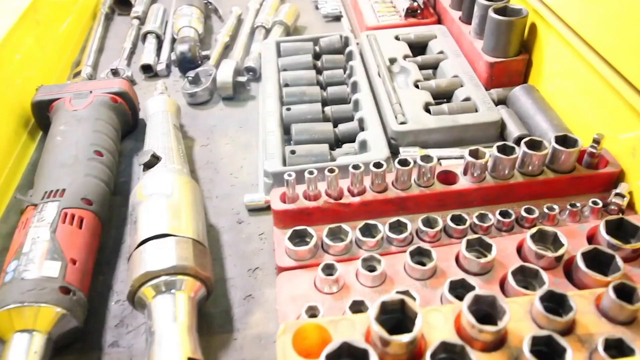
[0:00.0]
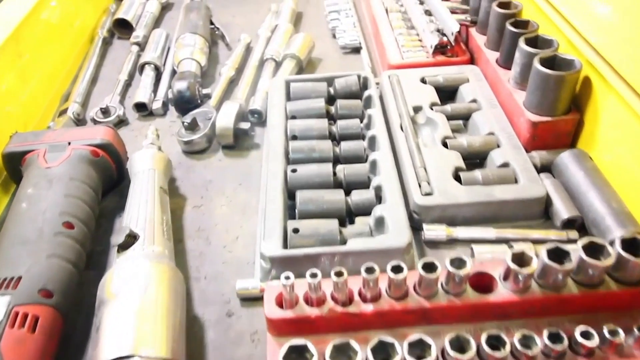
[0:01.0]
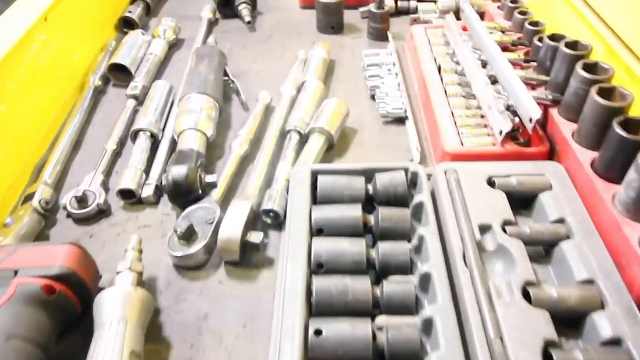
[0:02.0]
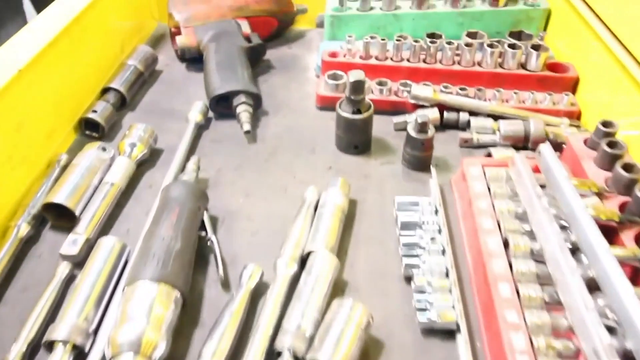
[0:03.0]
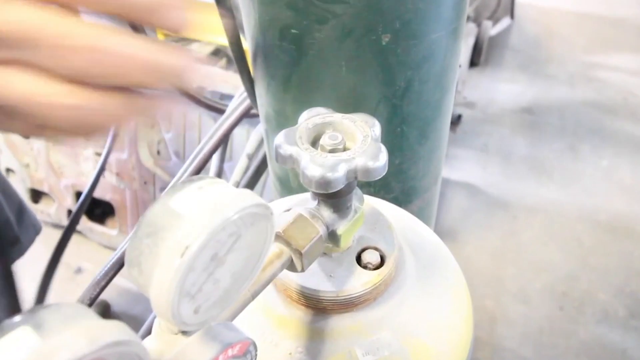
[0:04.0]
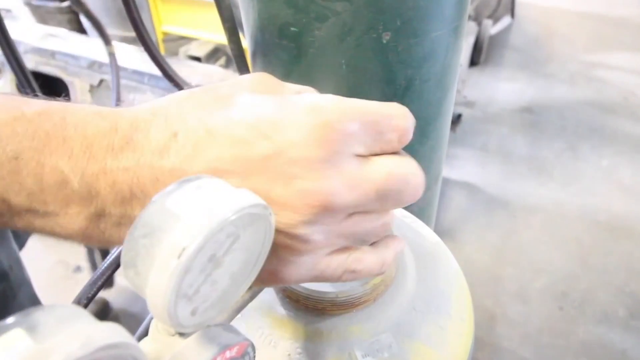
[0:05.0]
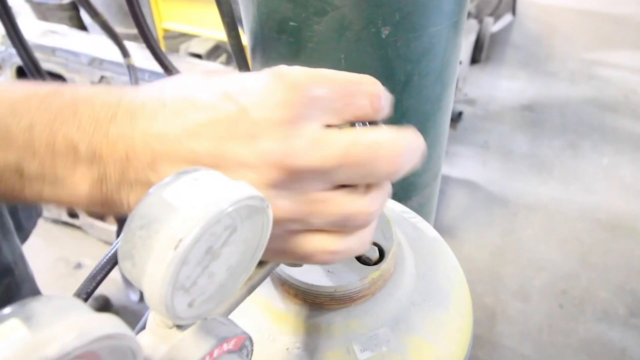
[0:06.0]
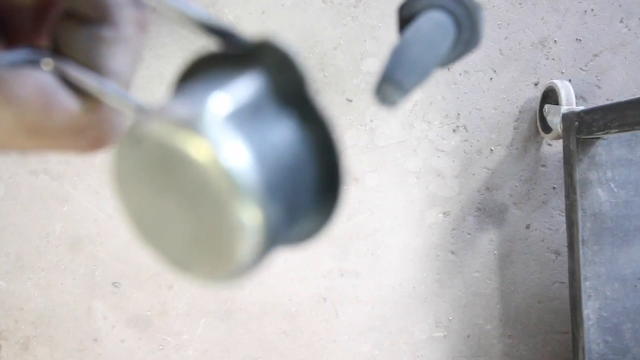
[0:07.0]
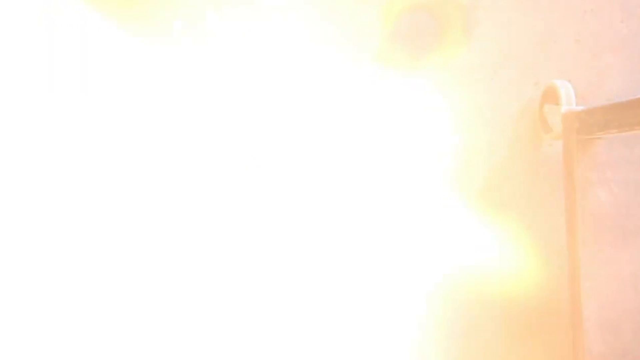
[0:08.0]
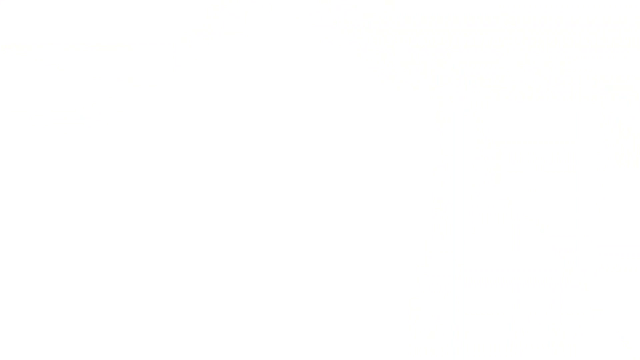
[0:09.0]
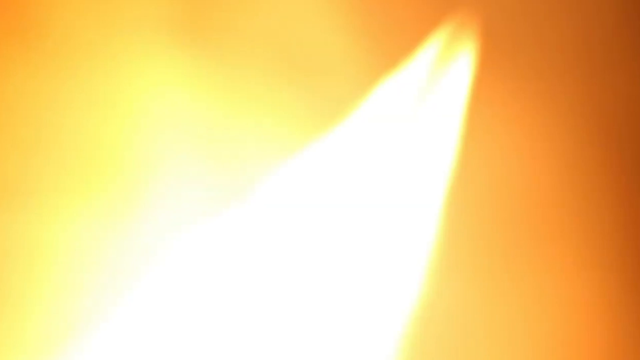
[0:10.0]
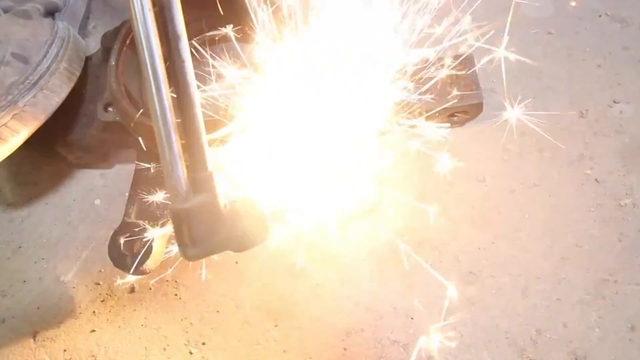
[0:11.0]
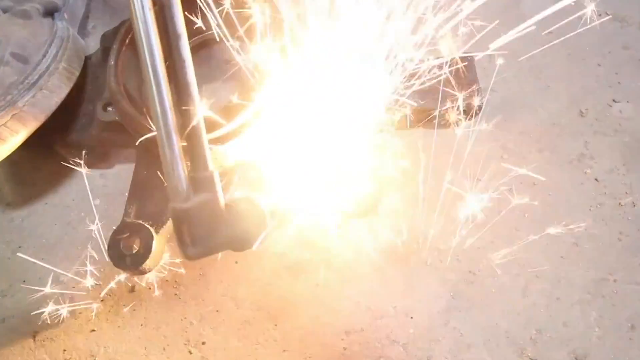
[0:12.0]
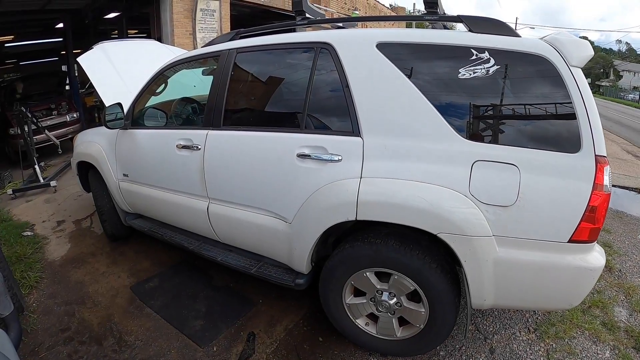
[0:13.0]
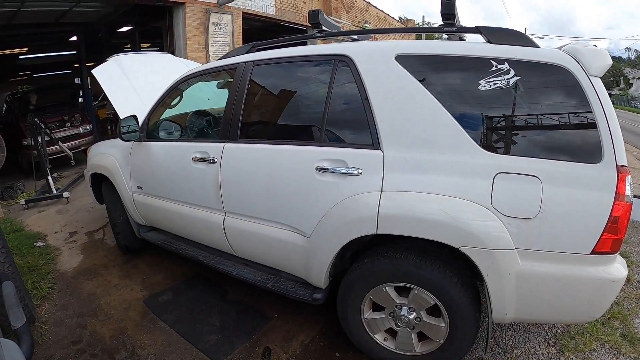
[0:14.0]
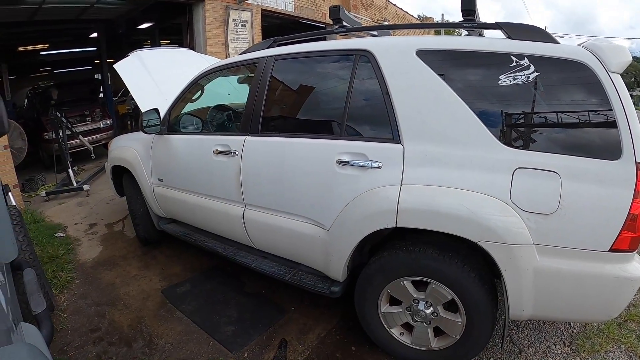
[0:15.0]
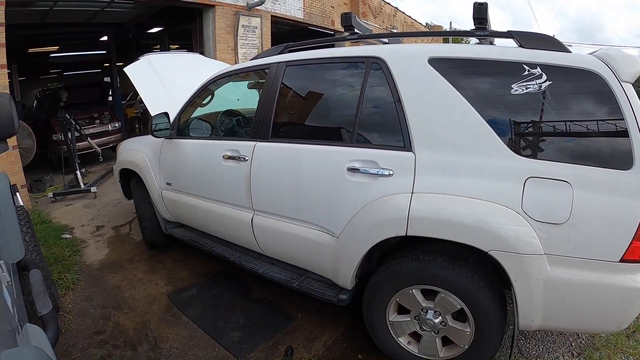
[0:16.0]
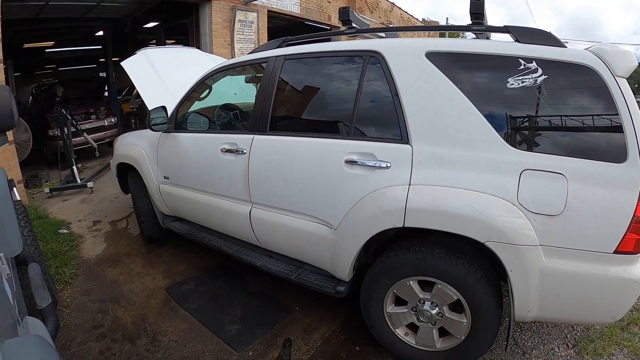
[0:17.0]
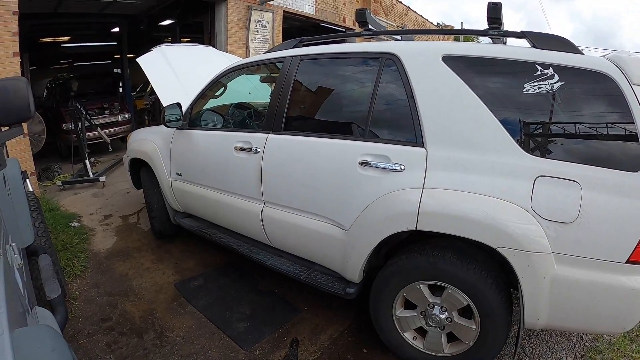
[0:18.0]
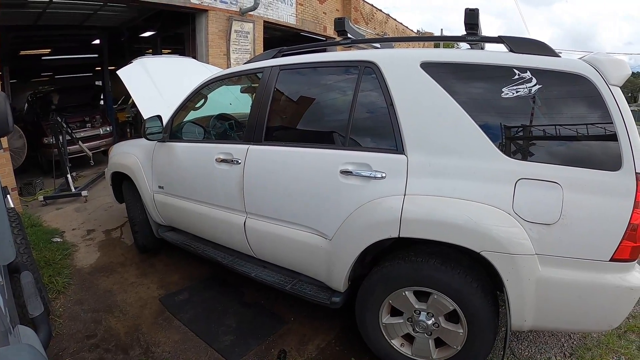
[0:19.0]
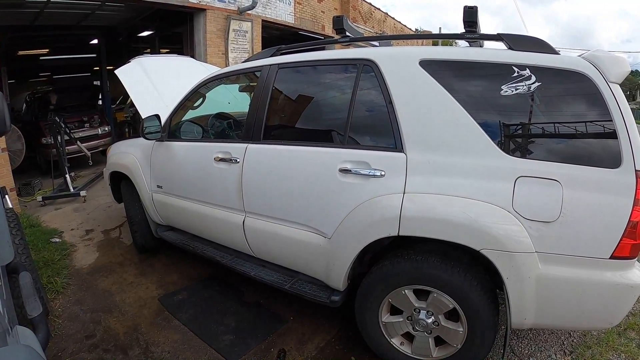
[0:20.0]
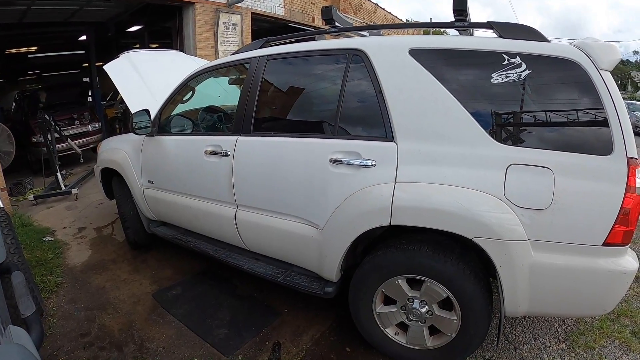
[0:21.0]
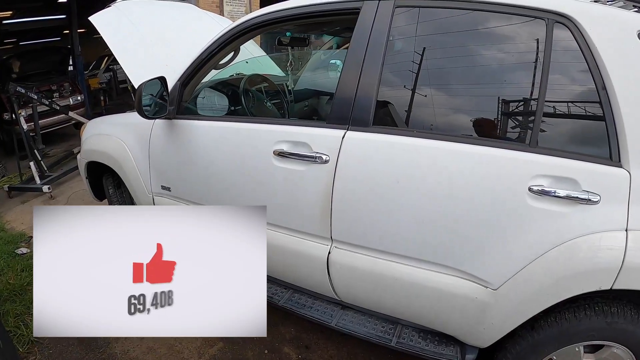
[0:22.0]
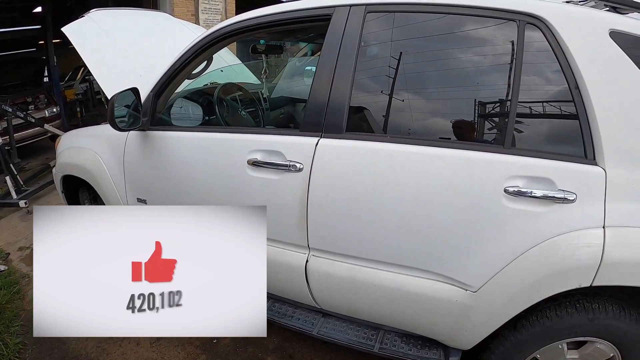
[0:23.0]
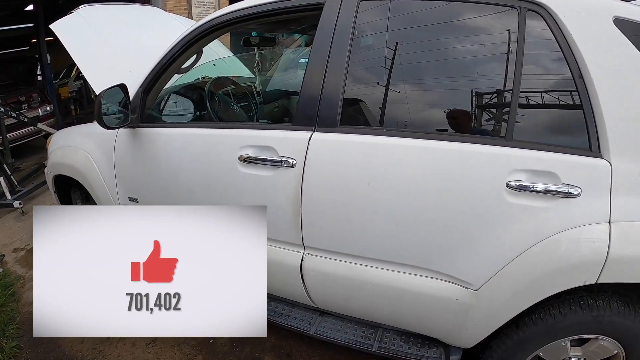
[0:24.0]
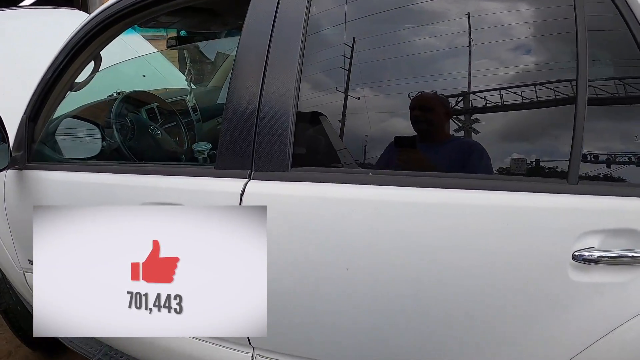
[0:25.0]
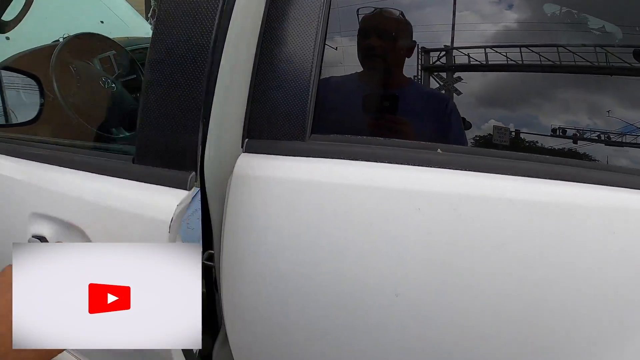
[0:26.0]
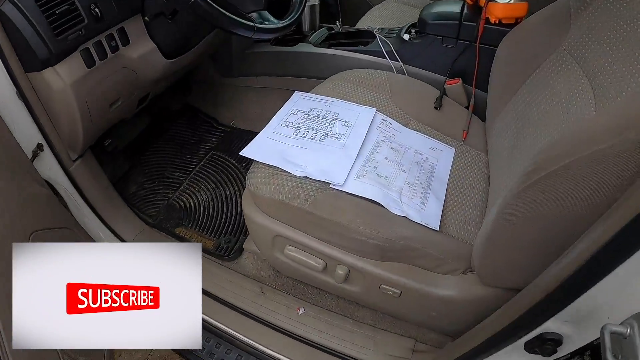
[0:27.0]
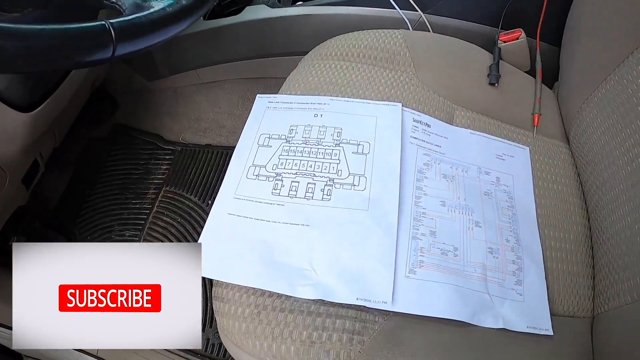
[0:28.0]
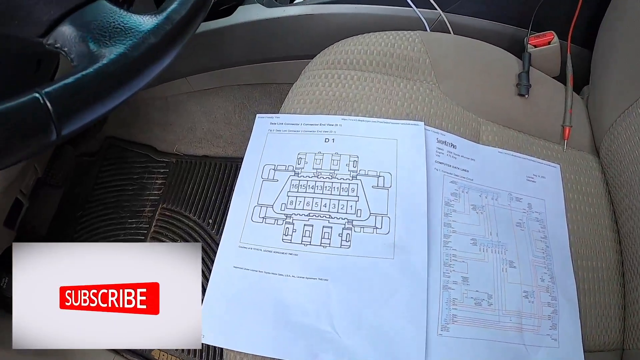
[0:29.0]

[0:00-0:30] A collection of tools resembling a tool kit is shown. On the right side are bolt pieces in many sizes, some smaller than the head of a pencil eraser and others bigger. The camera moves slowly, revealing even more sizes, and there is more than one set on the right side. The pieces shown first are silver, and further along they are dark gray. The view then switches to a person's right hand with the thumb on a knob, turning it counterclockwise to open it. A blast of fire comes from a handle and sparks fly. Next, a white SUV appears, seen from the driver's side, with its hood up.